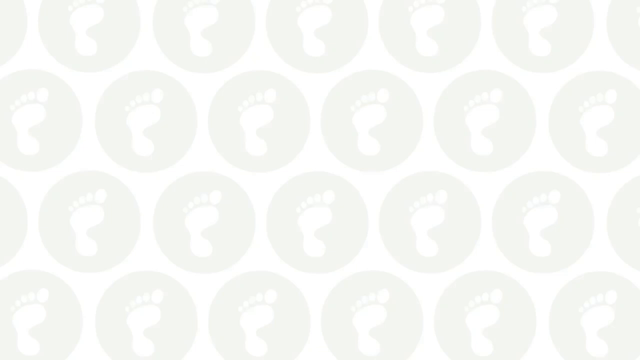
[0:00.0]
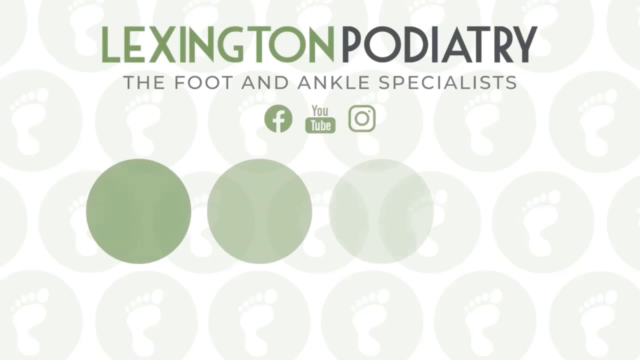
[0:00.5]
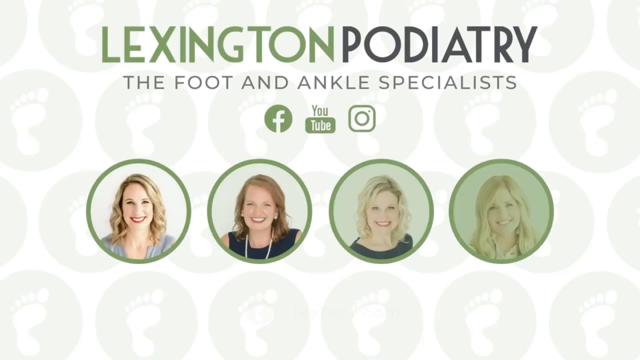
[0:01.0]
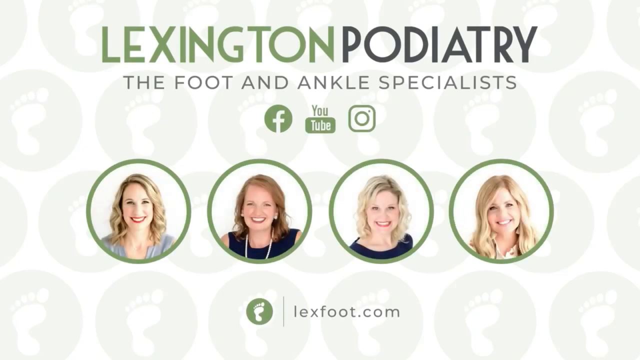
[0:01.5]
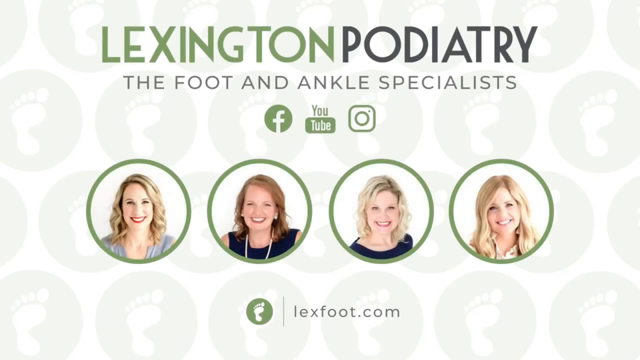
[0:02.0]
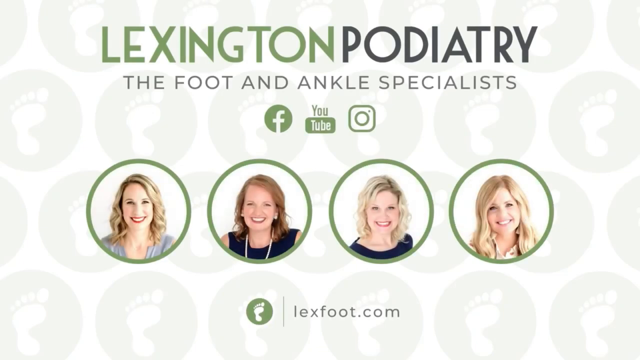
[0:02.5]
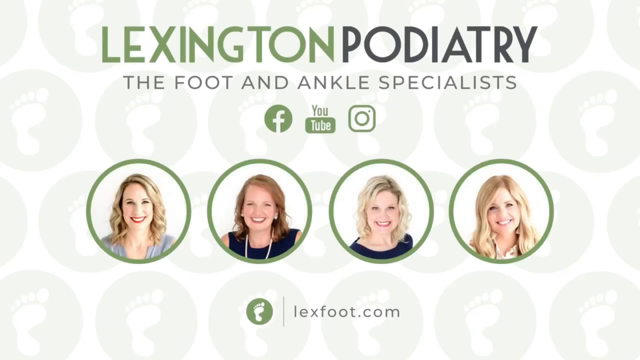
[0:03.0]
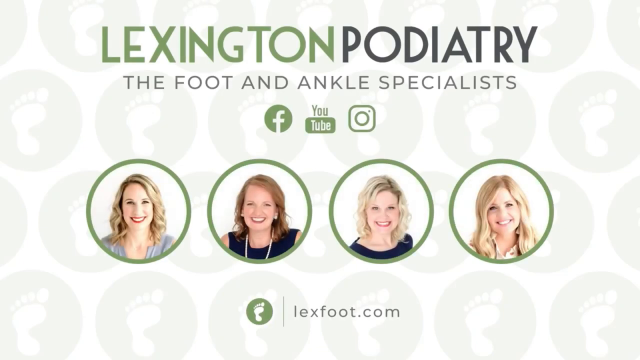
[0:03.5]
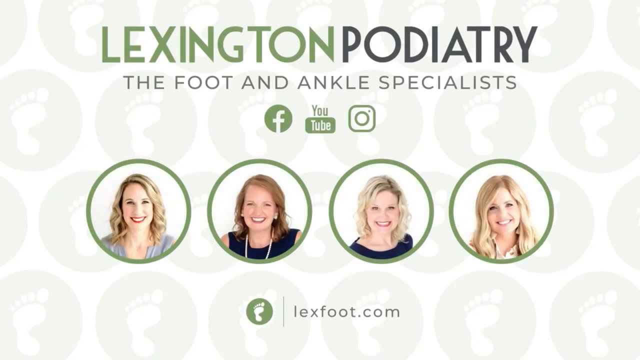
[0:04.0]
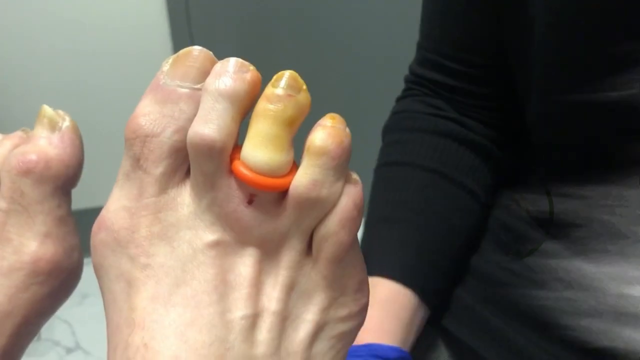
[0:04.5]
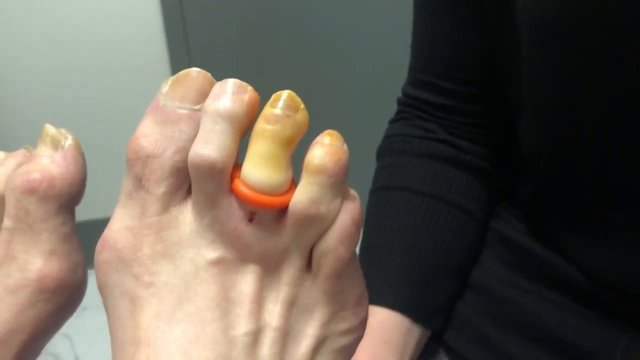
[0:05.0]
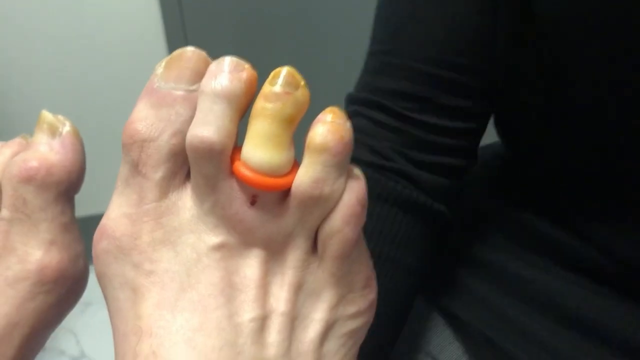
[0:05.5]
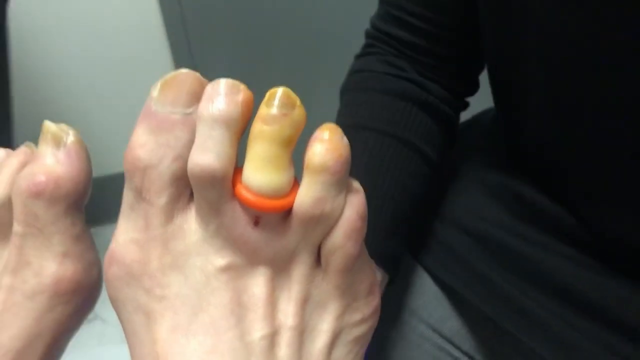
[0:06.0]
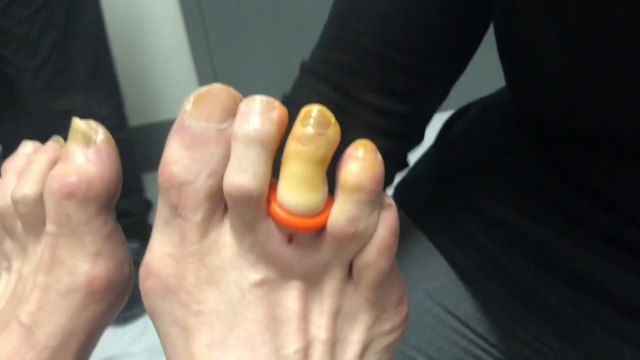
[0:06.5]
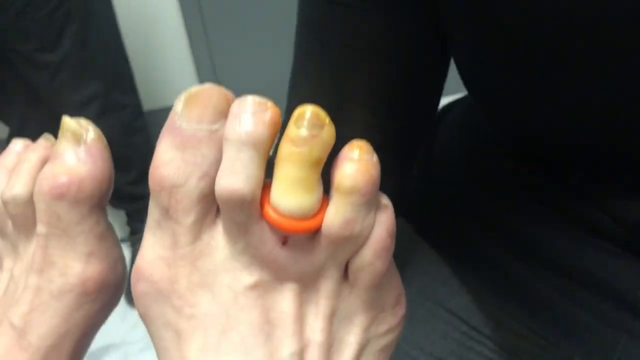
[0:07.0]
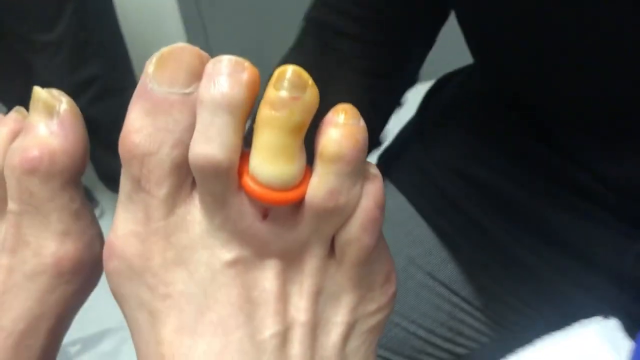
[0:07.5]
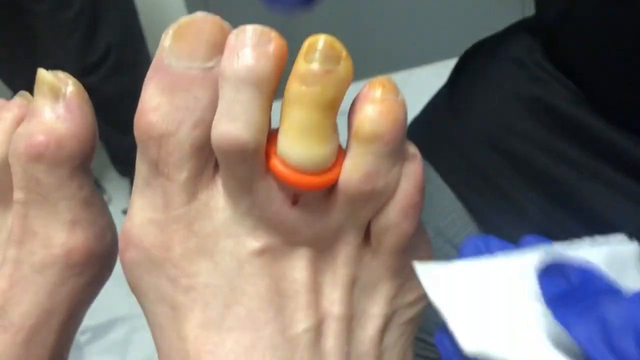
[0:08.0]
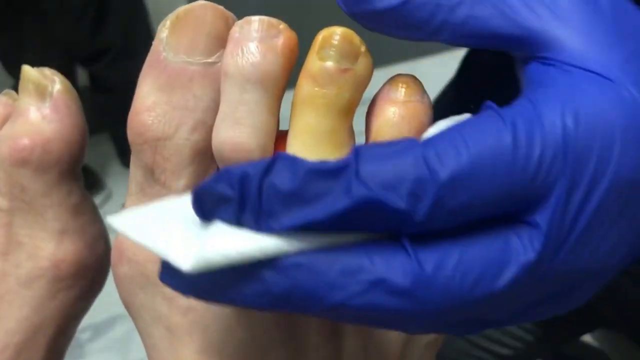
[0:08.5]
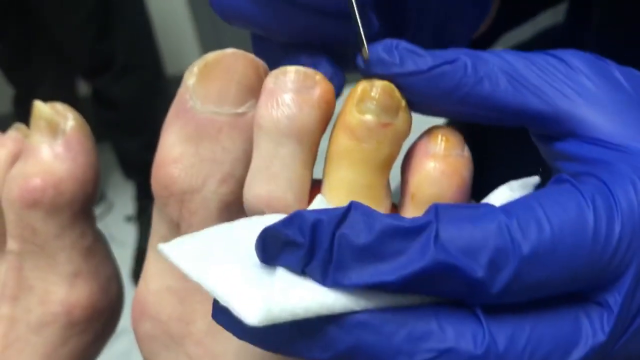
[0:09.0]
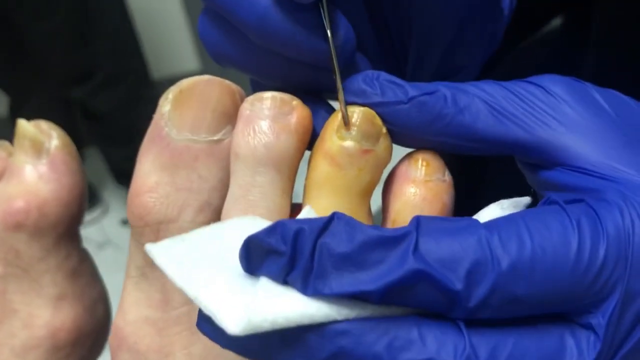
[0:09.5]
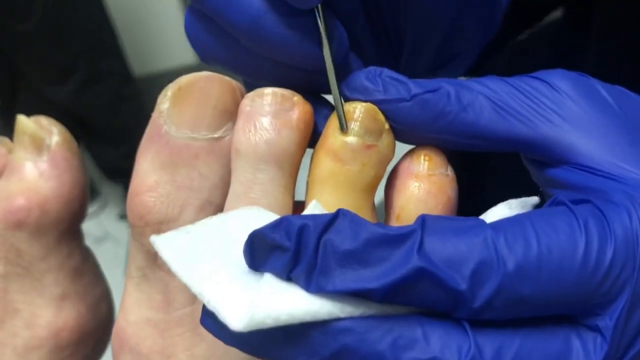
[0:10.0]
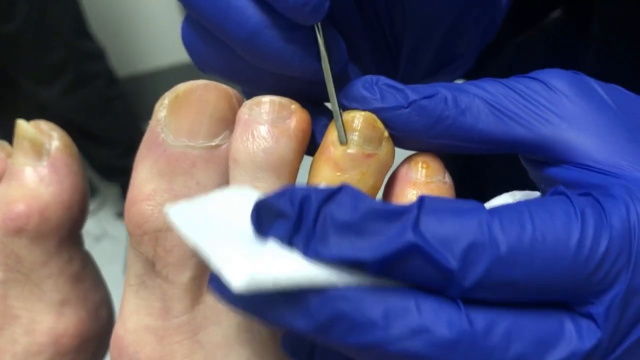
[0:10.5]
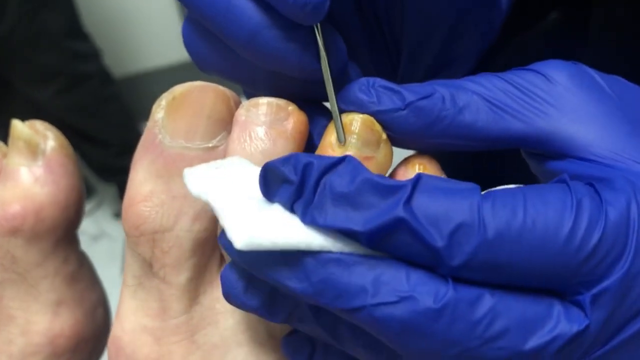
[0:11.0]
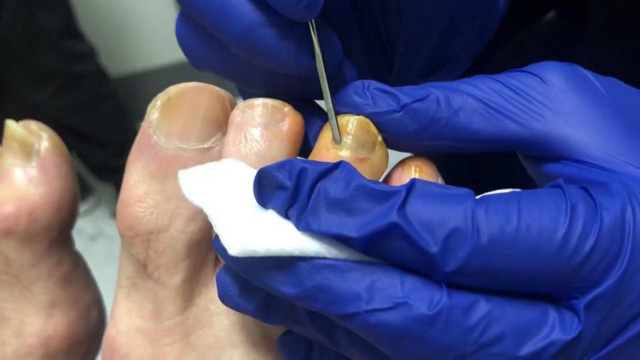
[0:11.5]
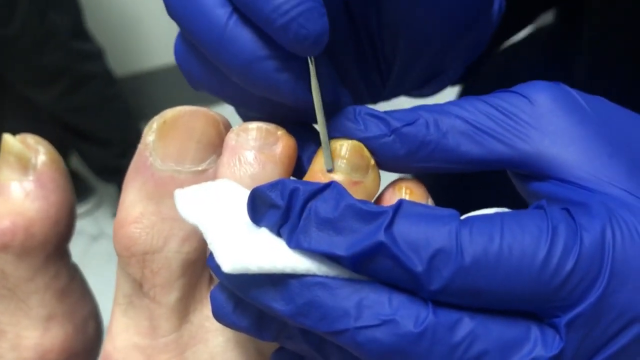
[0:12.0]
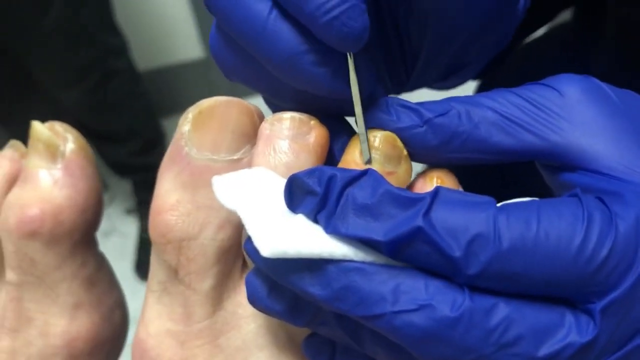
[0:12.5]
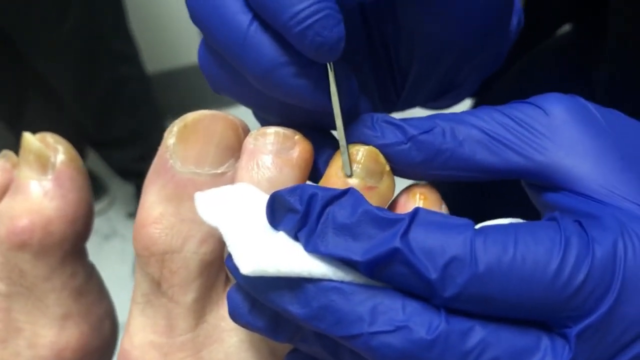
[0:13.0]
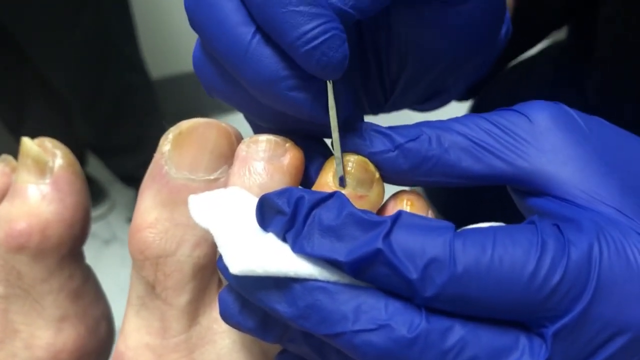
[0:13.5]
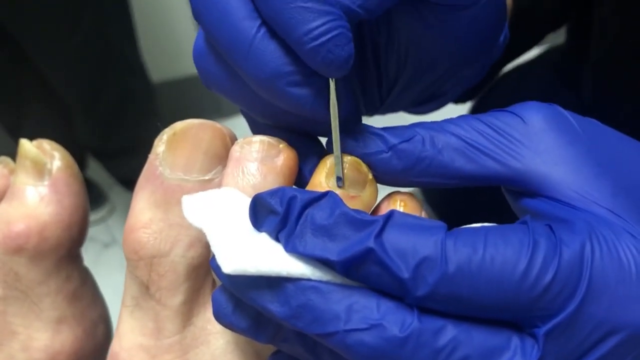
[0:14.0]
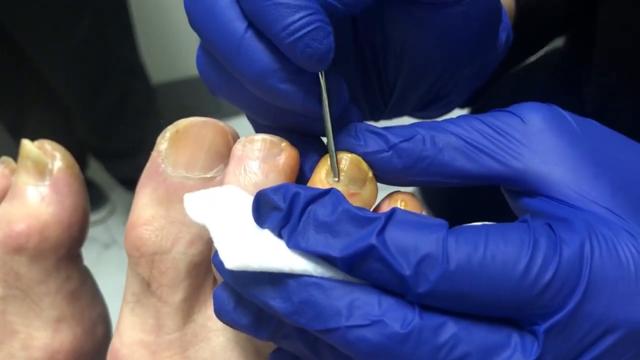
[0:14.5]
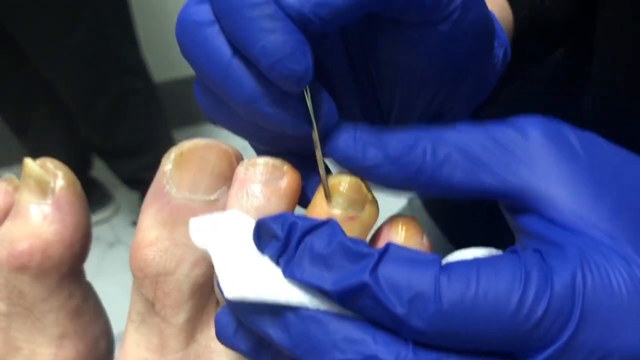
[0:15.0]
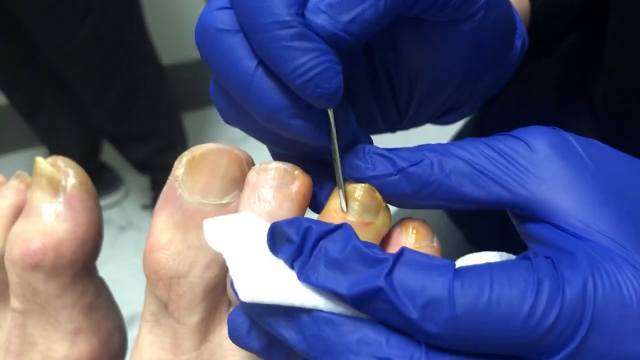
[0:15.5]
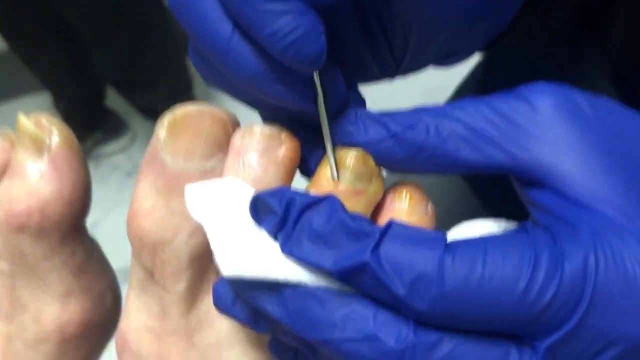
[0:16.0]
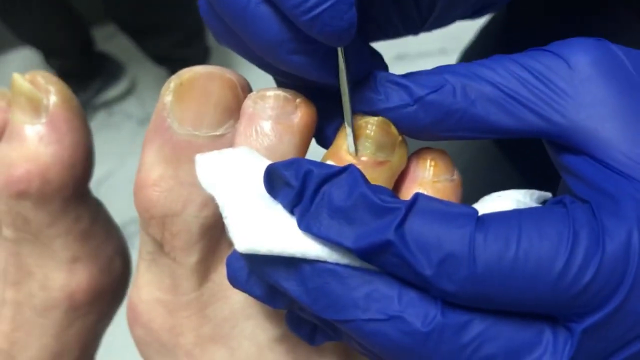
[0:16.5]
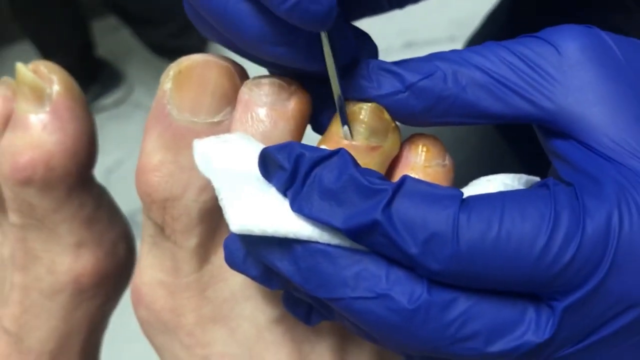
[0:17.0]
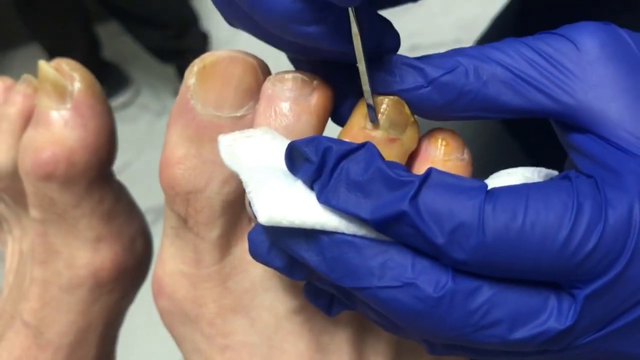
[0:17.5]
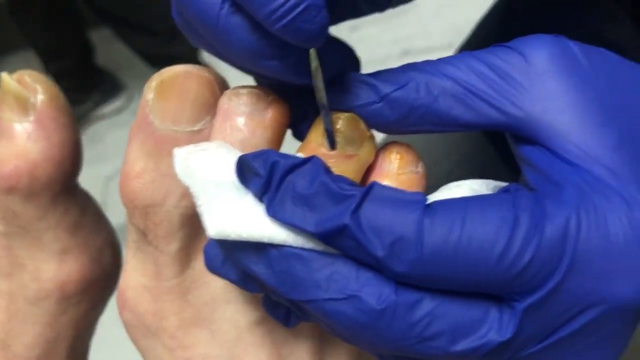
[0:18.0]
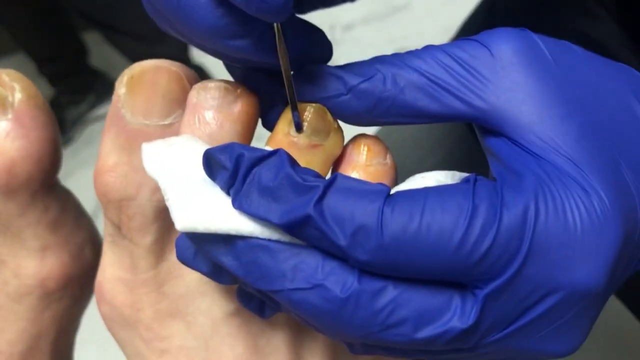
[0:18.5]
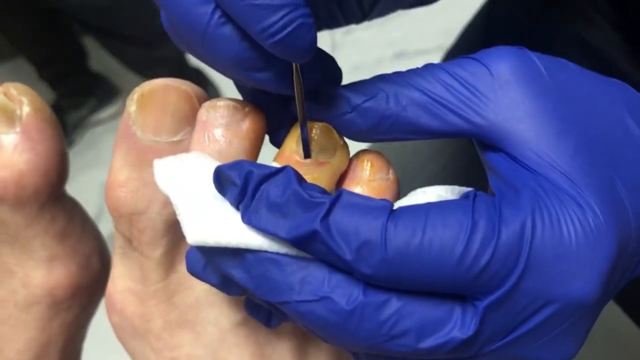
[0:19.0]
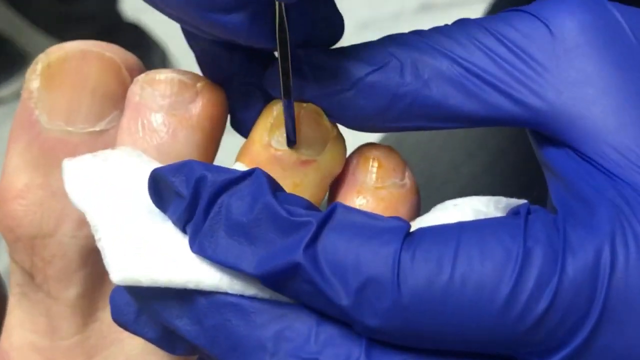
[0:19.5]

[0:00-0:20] Against a white background there are many individual colored circles, each with little footprints inside. Text pops up reading "Lexington Podiatry, the foot and ankle specialist," followed by links for Facebook, YouTube and Instagram. Four profile pictures appear, apparently of four female podiatrists who all look to be anywhere from their 40s to their 60s, along with the website URL "lexfoot.com". Then there is a close-up of someone's foot, which looks like it belongs to an older Caucasian person. Around the third toe, the middle one, is an orange device, and the toe is almost a green color. A person wearing dark blue gloves is sitting in front of the foot holding a sharp metal object, sticking it into the cuticle of the toe and pushing it down. As they push, a clear liquid comes out.